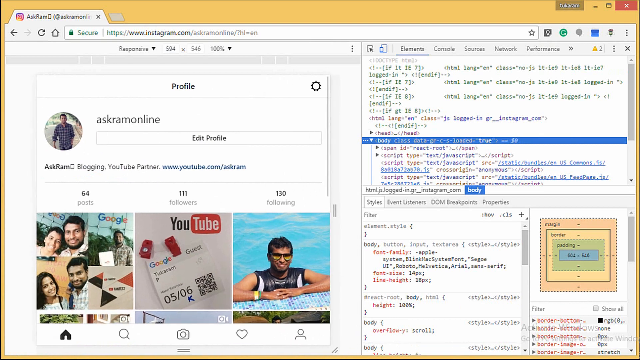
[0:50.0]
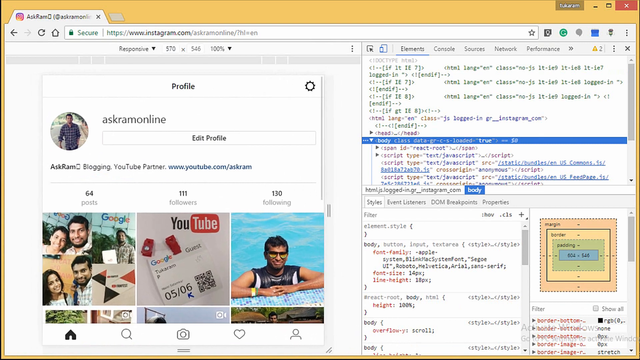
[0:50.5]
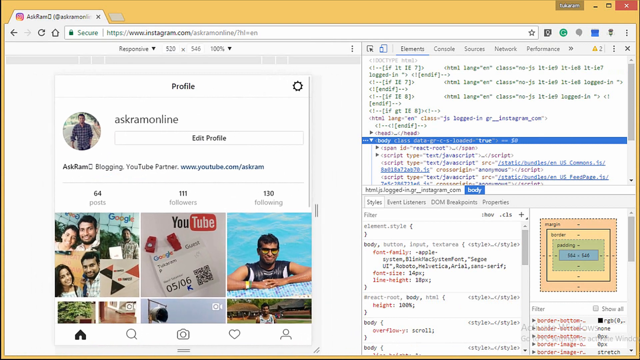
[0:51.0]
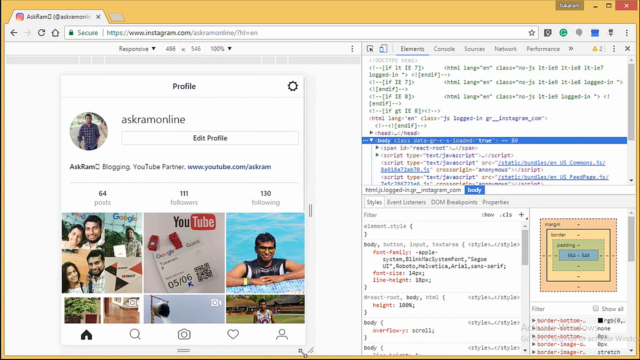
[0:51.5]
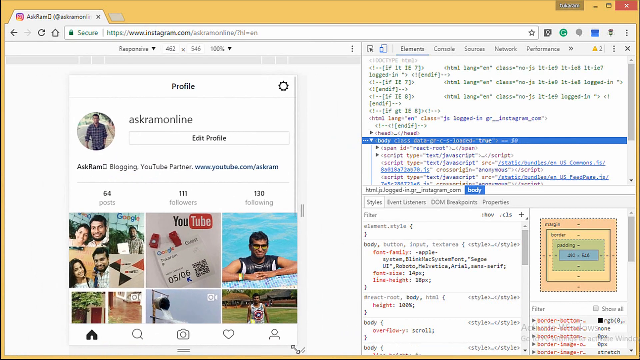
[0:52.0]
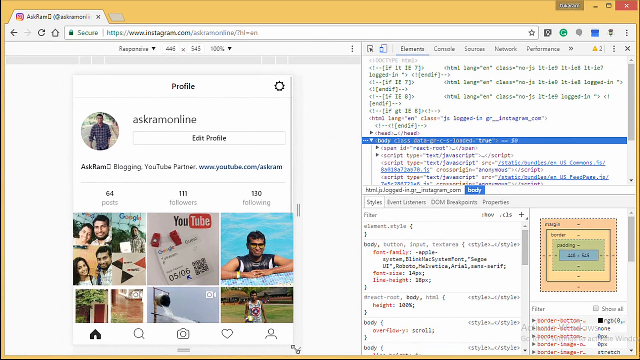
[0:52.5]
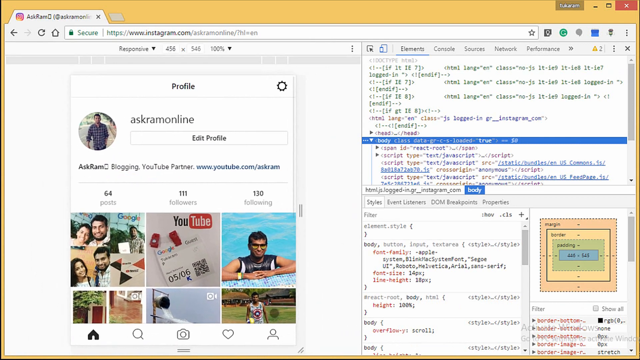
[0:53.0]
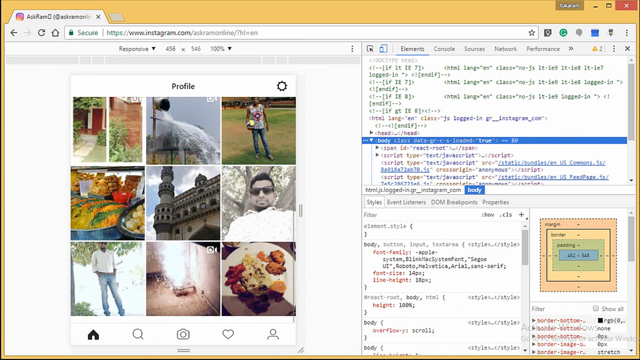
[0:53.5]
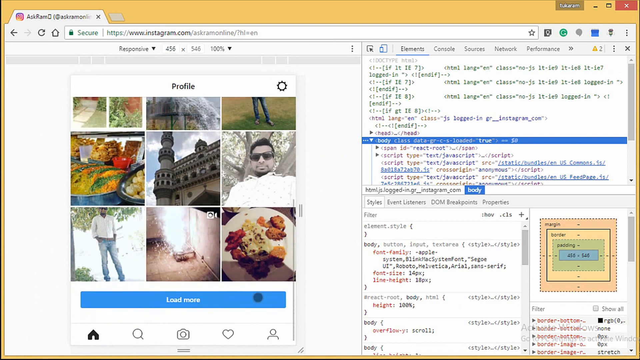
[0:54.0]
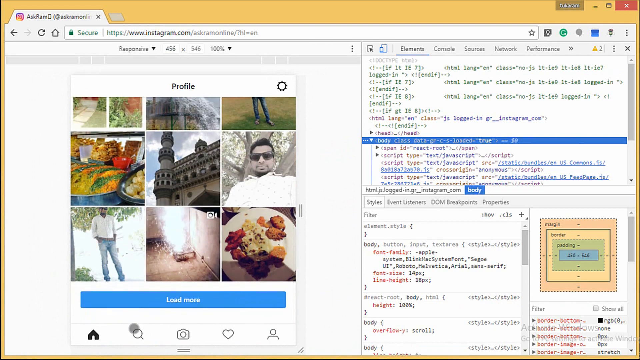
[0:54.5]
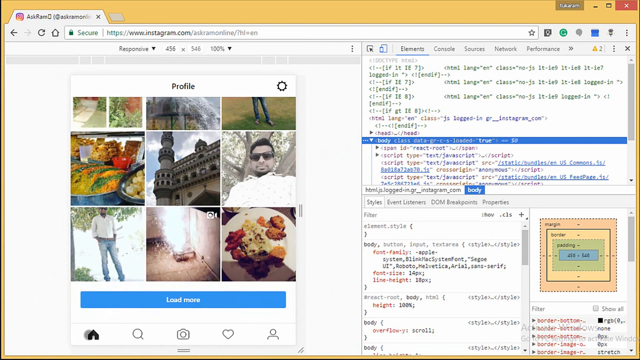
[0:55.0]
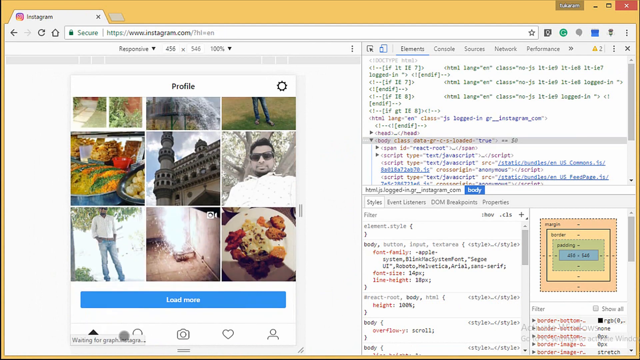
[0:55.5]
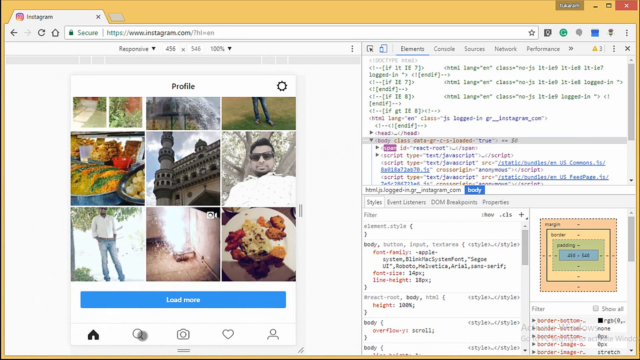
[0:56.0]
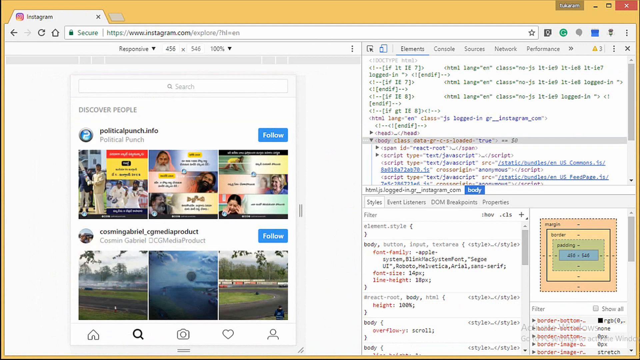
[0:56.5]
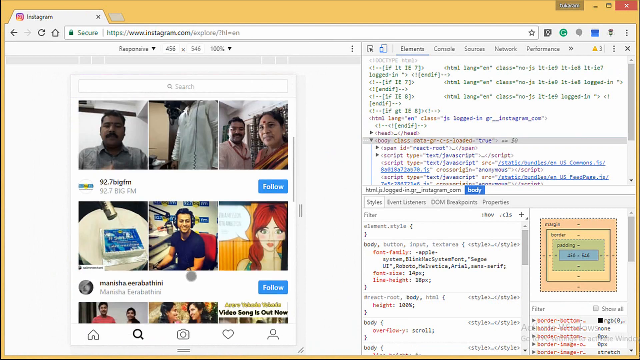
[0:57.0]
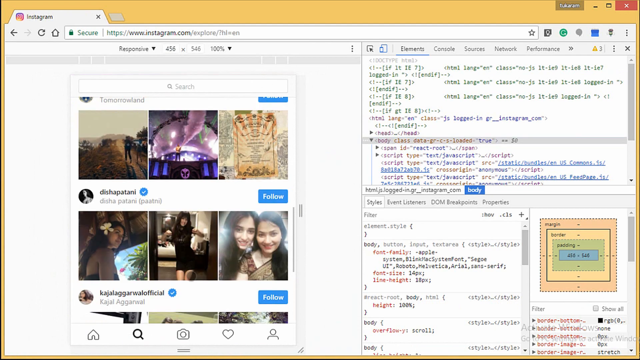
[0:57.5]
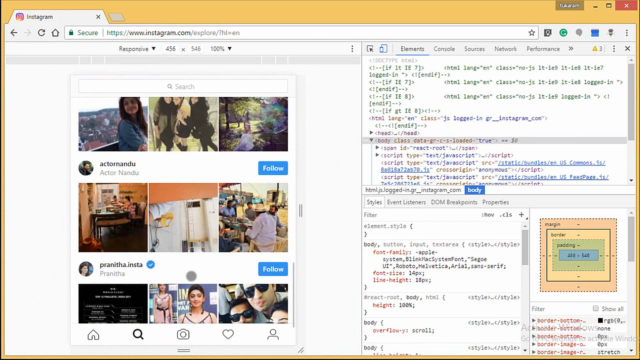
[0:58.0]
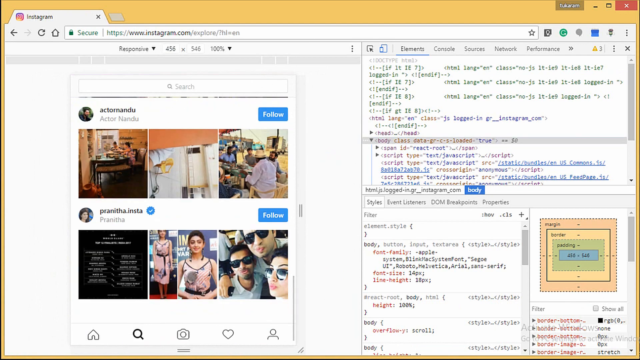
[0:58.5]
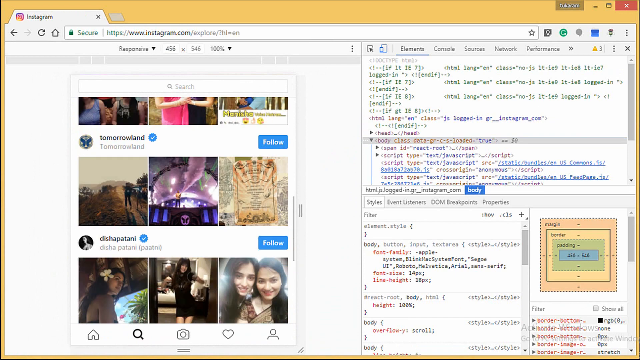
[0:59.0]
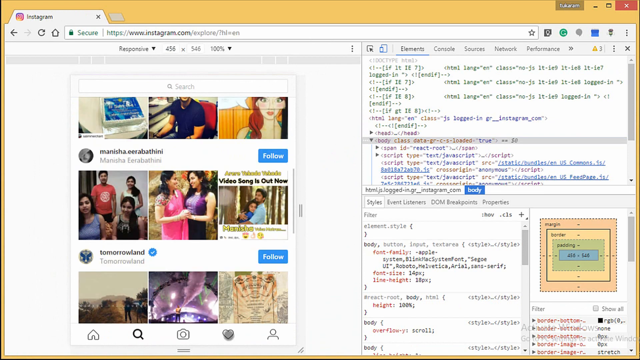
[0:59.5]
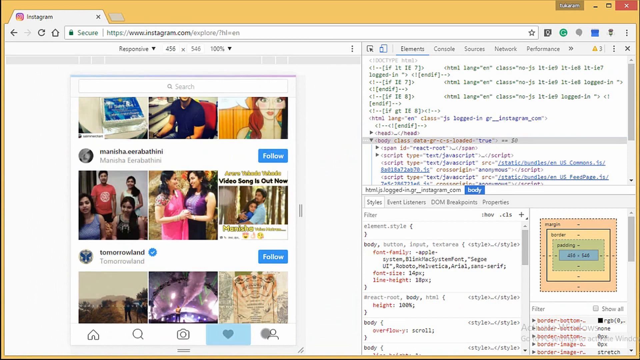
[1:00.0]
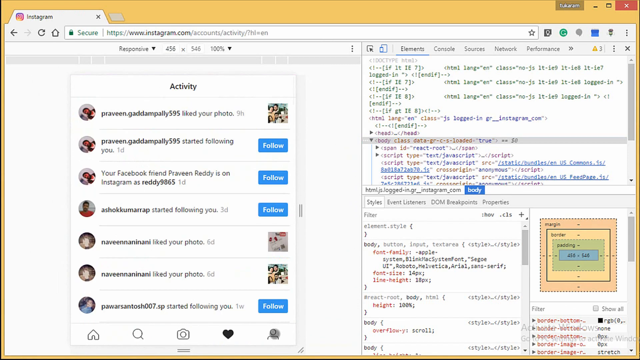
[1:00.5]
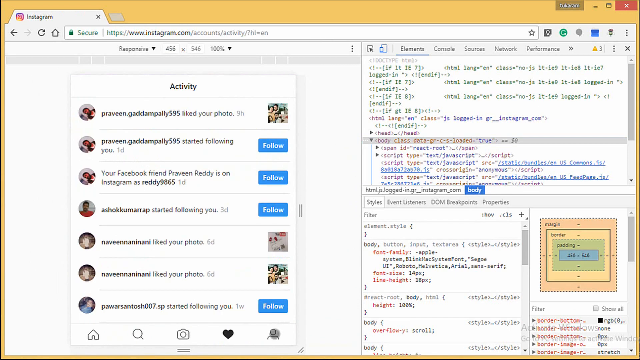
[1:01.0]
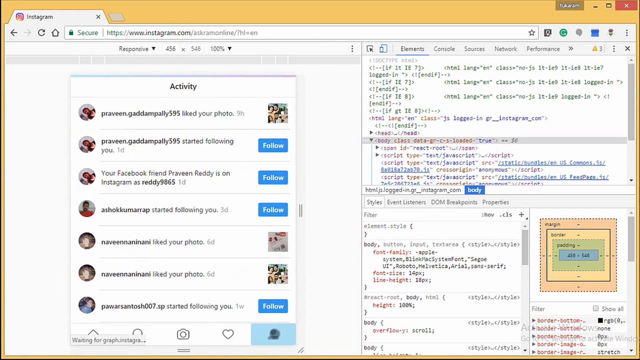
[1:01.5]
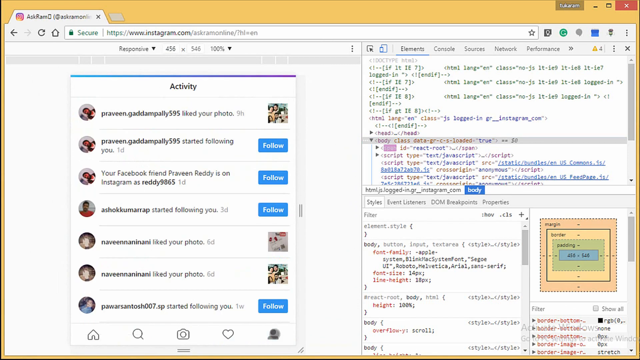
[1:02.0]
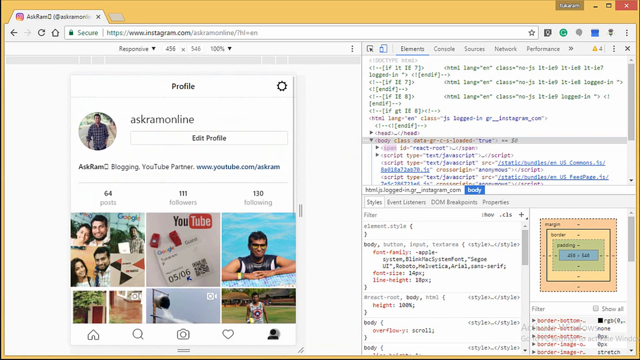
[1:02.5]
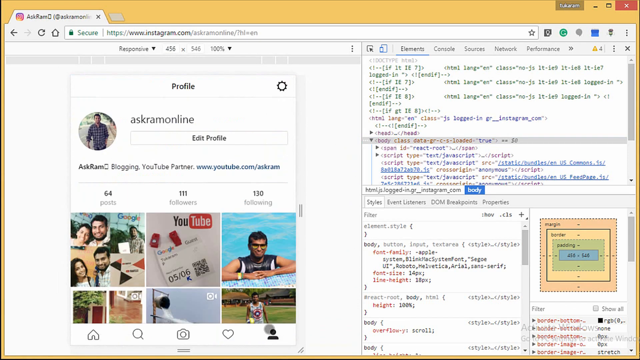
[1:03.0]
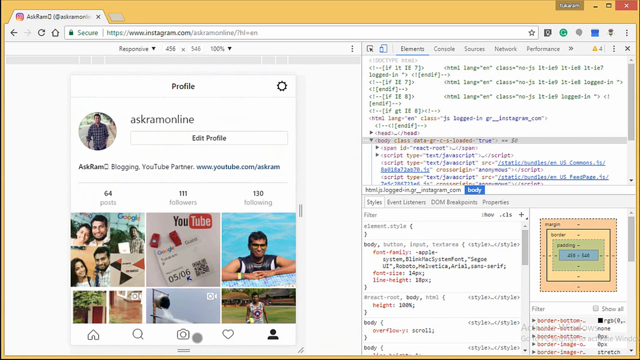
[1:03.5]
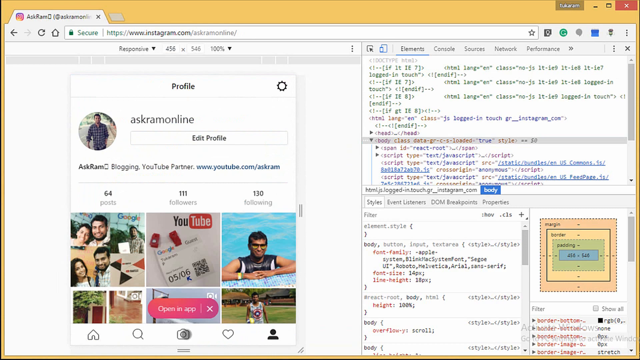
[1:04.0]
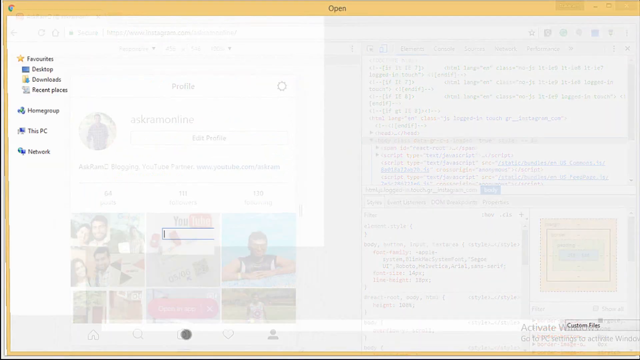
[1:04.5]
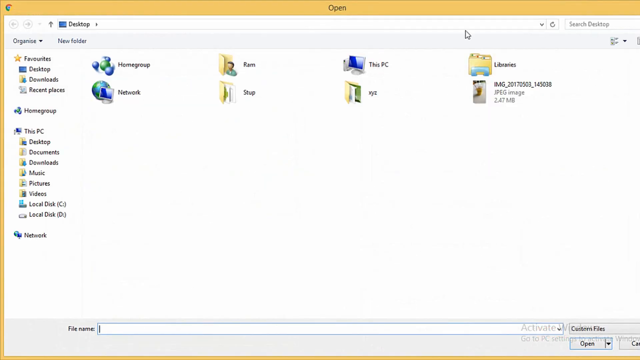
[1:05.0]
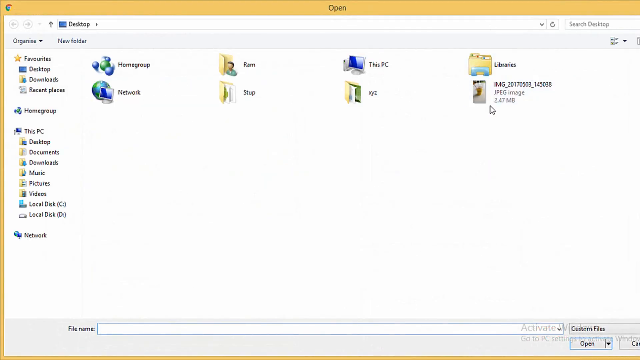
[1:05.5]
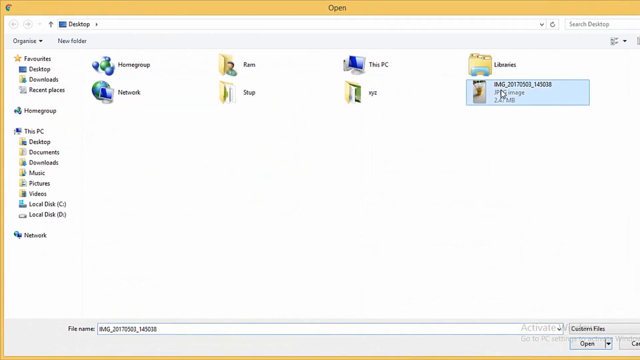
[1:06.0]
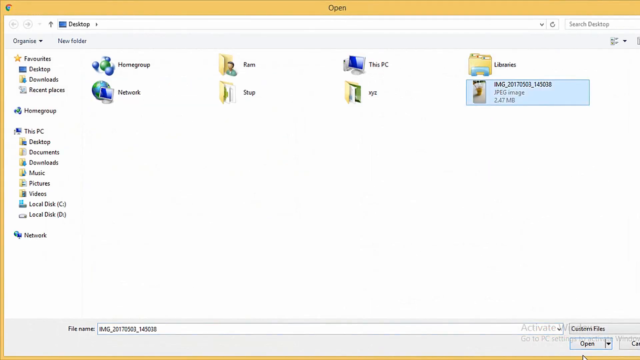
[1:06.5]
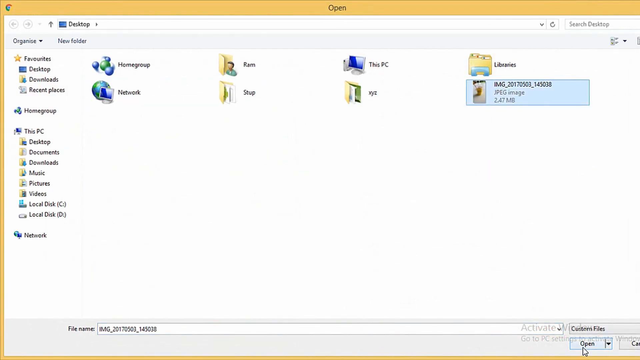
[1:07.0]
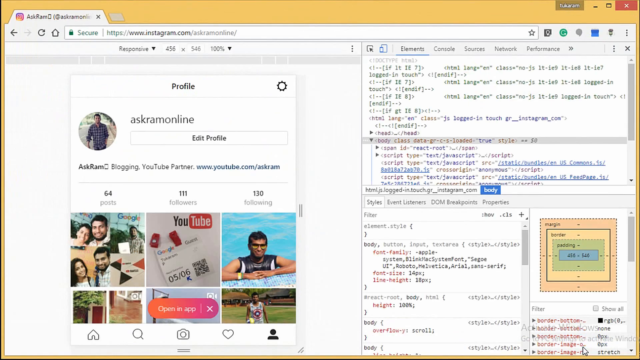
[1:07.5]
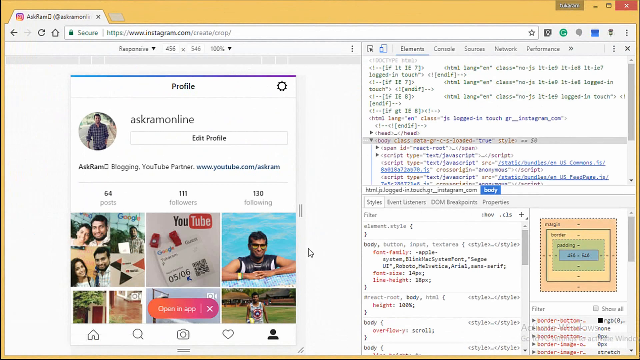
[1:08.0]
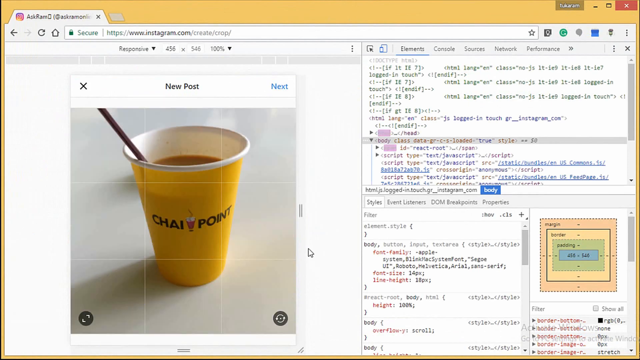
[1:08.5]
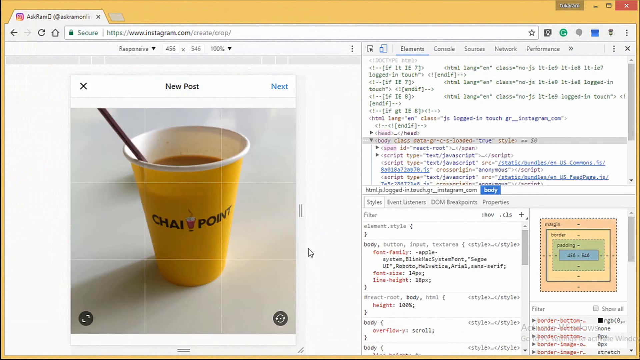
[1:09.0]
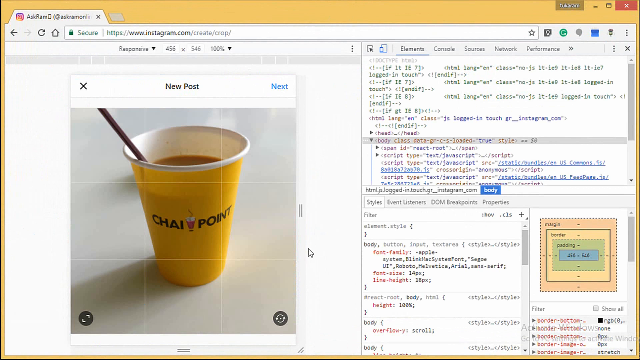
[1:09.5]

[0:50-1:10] The person zooms out so he can scroll down. More pictures appear with different people, including more ladies and some children, along with more pictures of food. He then goes to another page that has some folders and opens a folder, which also contains pictures. He shows a recent poster he was going to post: a yellow cup with something dark inside, maybe black tea, Coke or even soup, and a straw inside the cup. The code he is working on is still visible on the right side of the screen. He then goes back to his profile, where the YouTube logo is also visible.